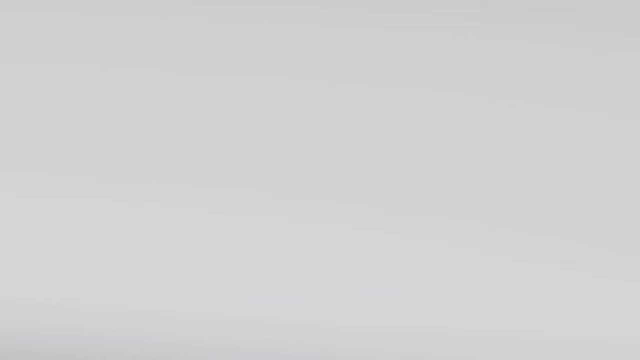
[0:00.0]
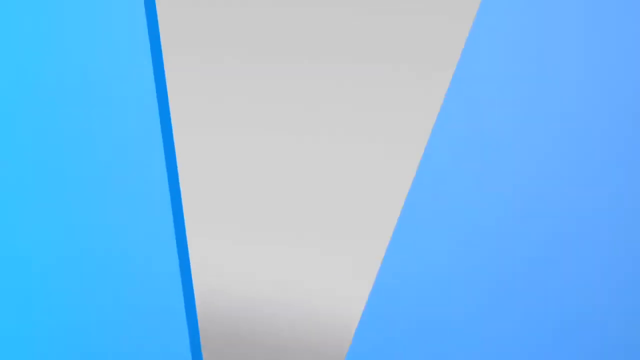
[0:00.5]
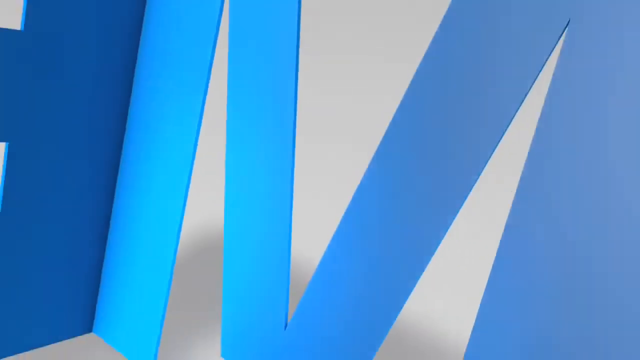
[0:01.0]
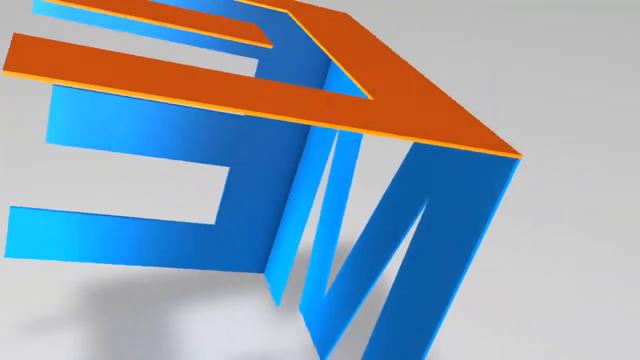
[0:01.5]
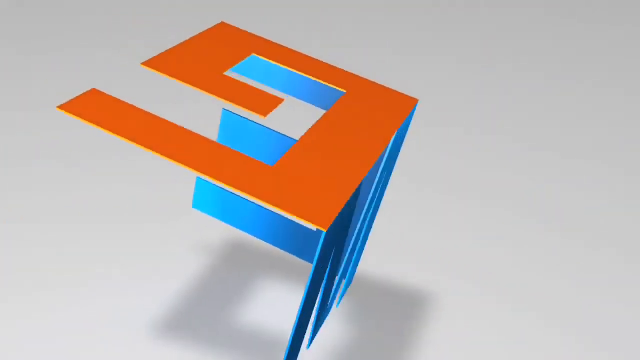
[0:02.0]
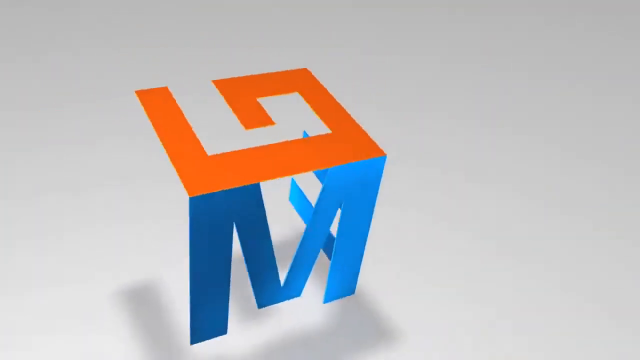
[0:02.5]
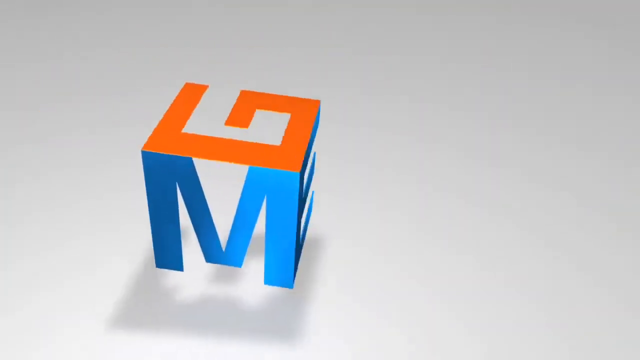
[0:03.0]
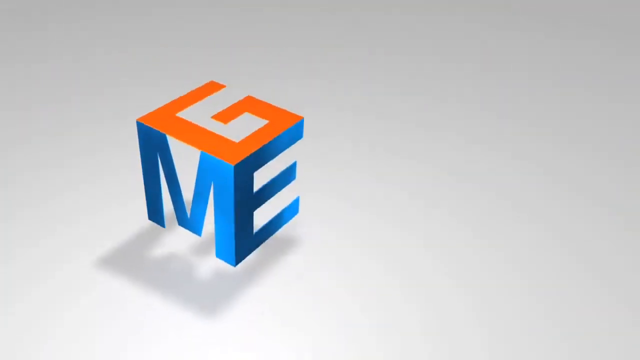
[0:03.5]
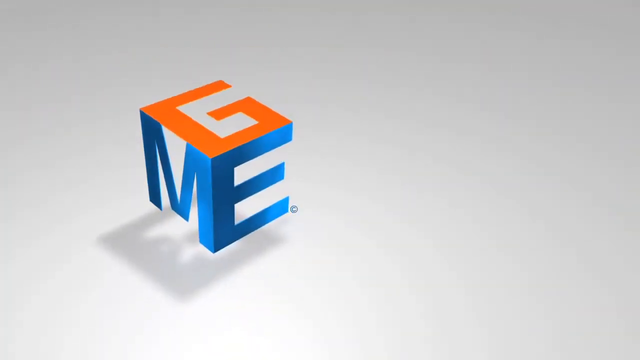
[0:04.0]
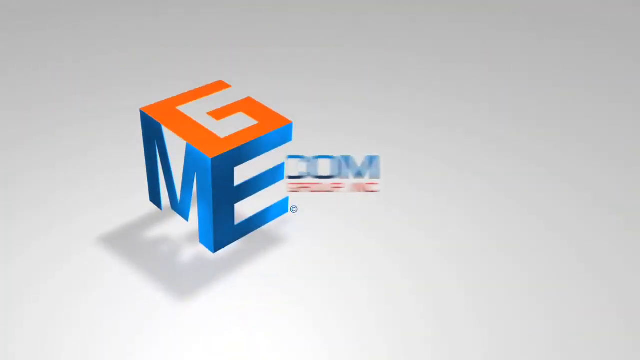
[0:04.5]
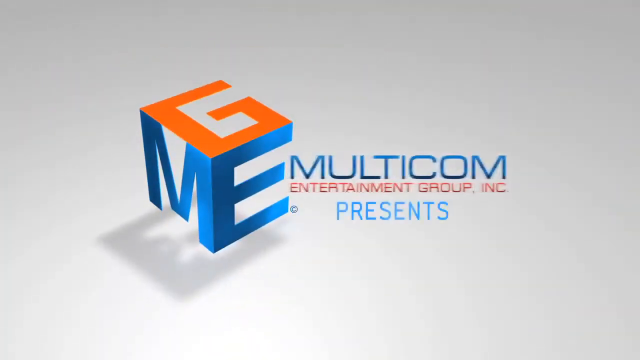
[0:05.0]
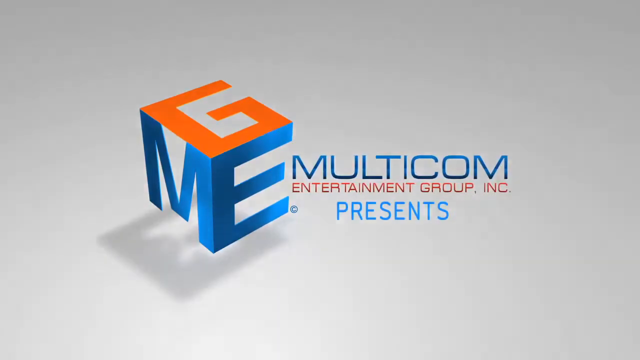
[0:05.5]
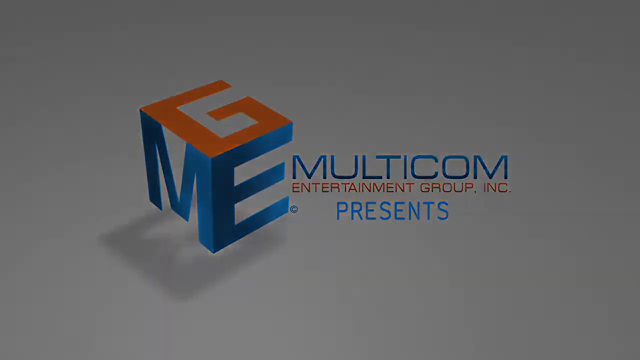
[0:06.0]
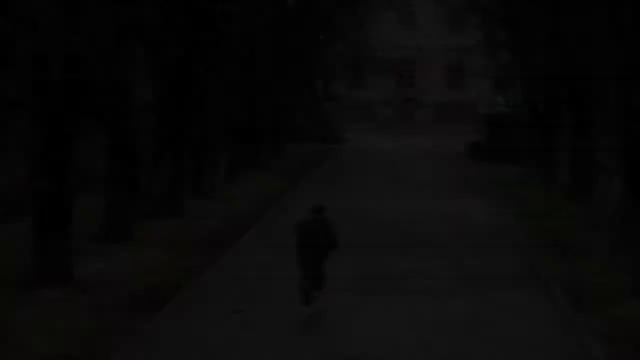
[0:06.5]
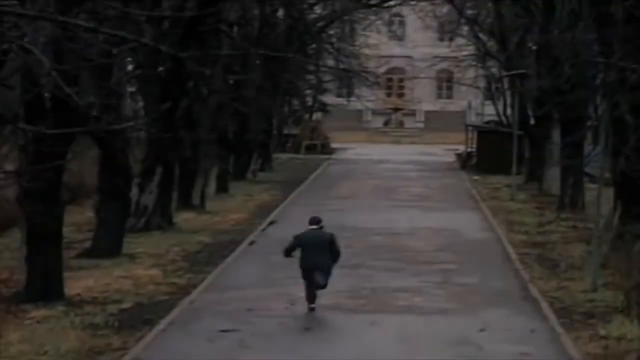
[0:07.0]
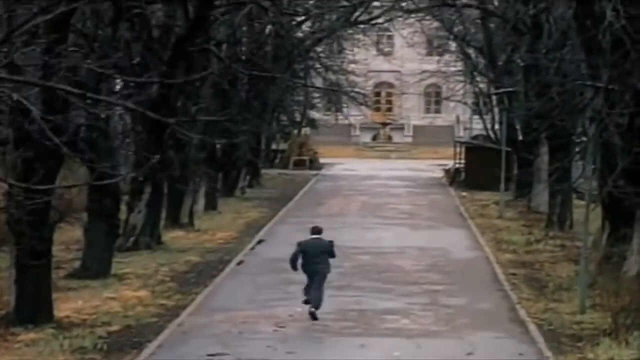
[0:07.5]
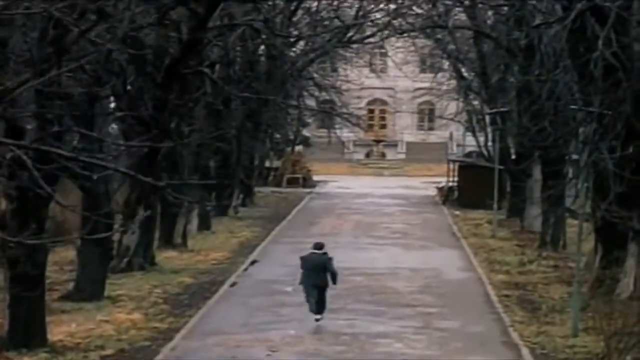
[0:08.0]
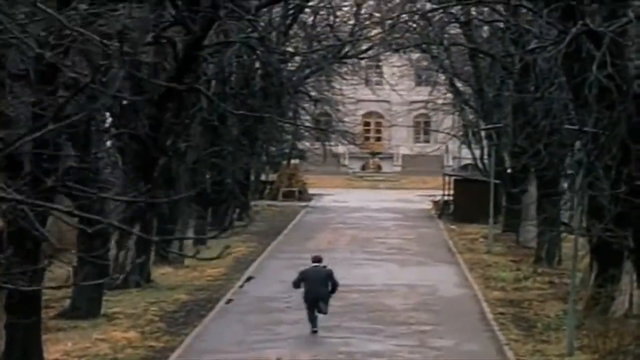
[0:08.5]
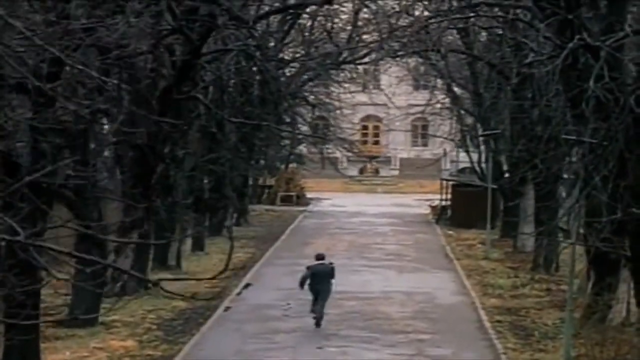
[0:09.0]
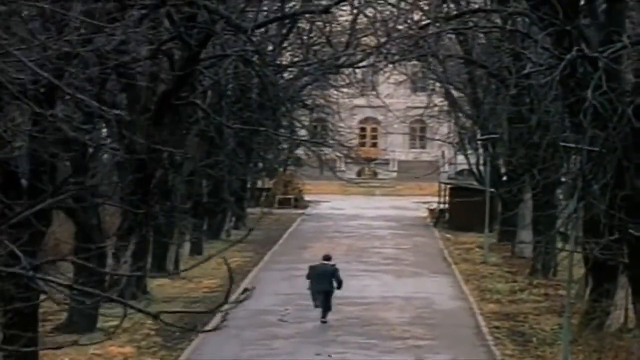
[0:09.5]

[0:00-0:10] A man in a gray or black suit, probably middle-aged at around 35 to 45 years old, with dark hair, runs down a wide path or driveway. He is the only person in the video. He runs along a huge tree-lined drive, with lots of trees on both sides, toward a great big mansion. The trees have no leaves, and no sunshine is visible, so it may be fall.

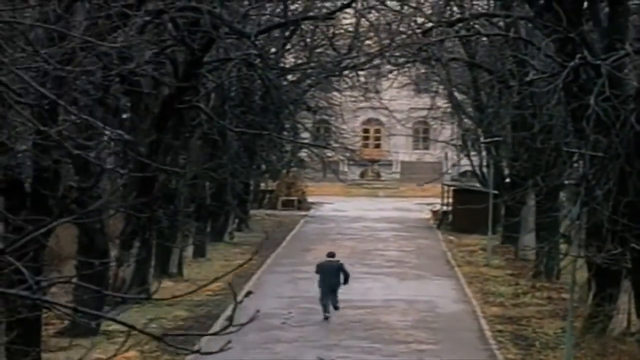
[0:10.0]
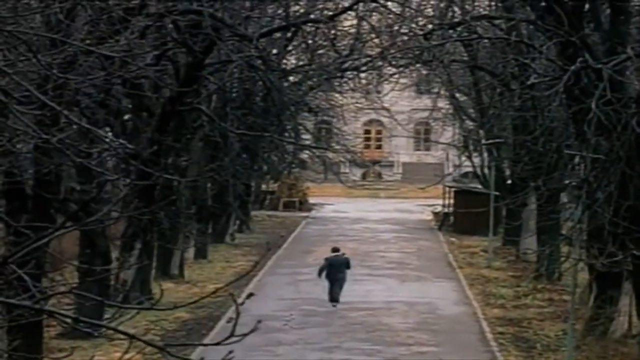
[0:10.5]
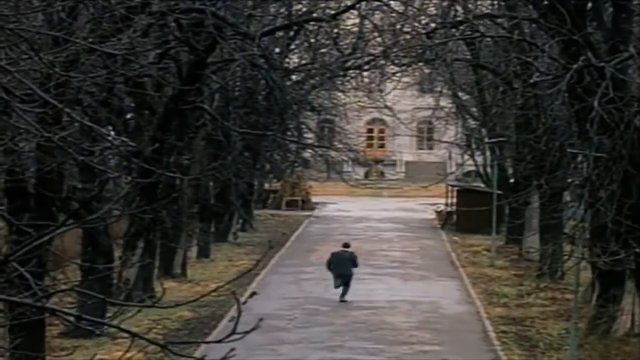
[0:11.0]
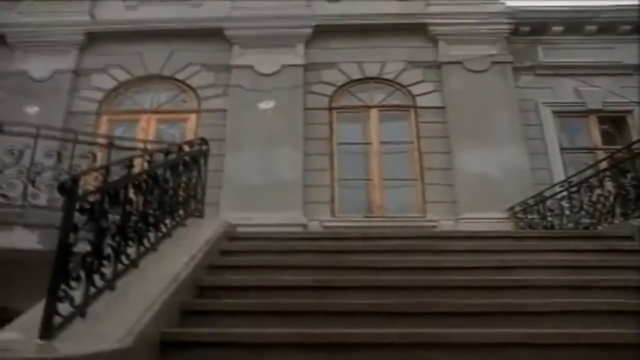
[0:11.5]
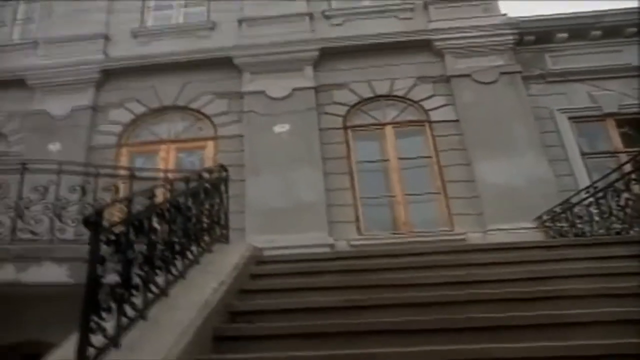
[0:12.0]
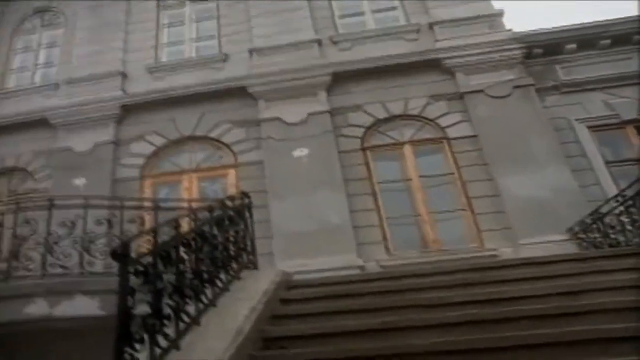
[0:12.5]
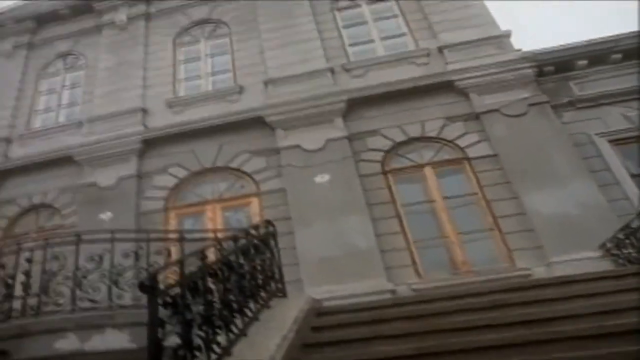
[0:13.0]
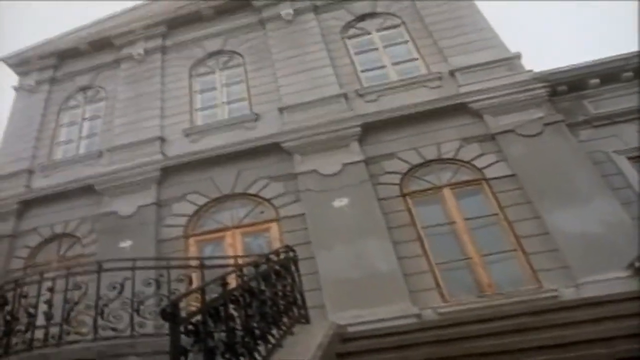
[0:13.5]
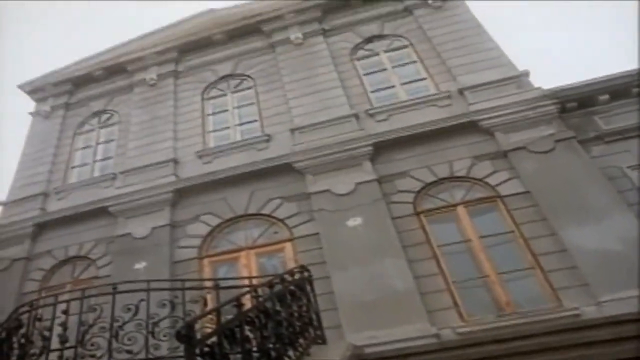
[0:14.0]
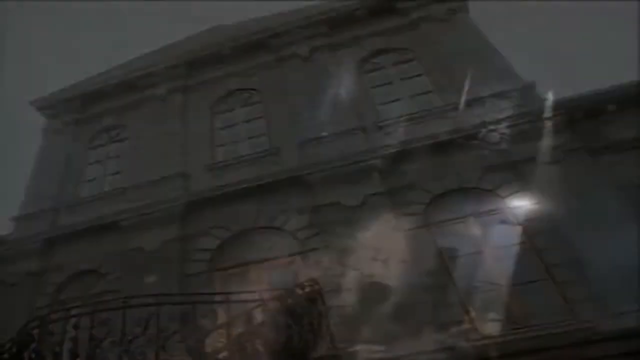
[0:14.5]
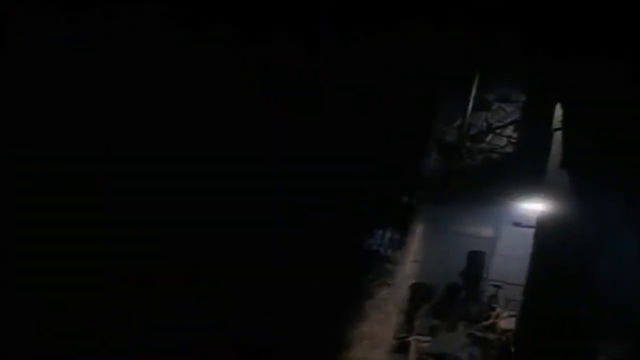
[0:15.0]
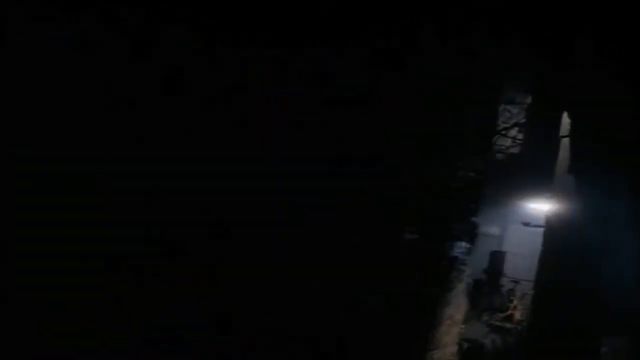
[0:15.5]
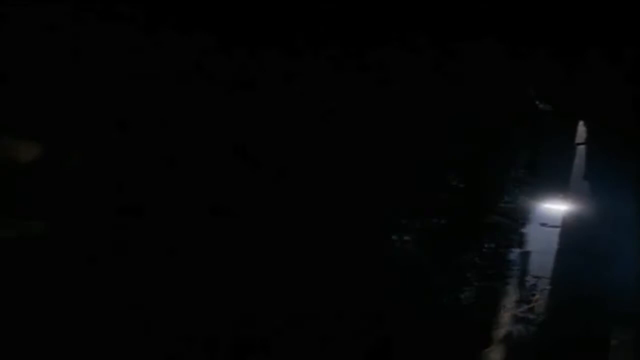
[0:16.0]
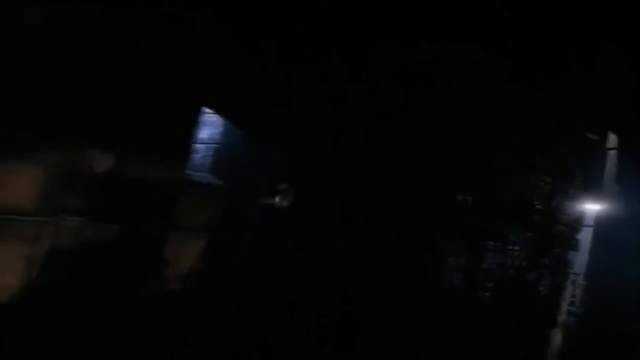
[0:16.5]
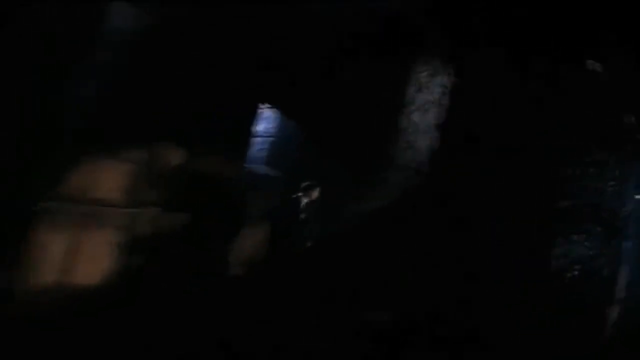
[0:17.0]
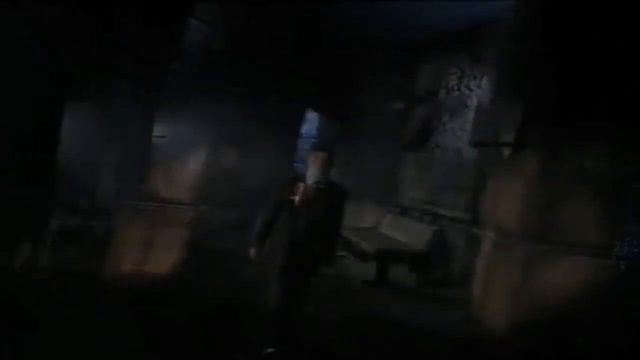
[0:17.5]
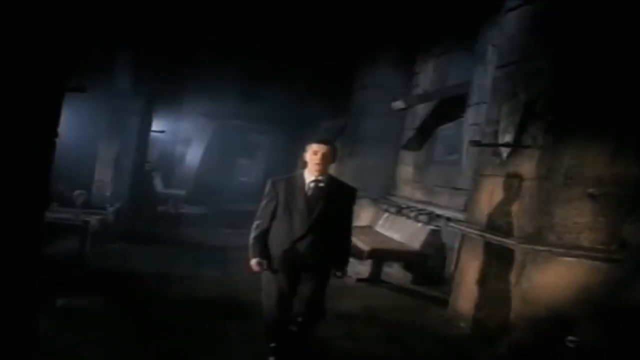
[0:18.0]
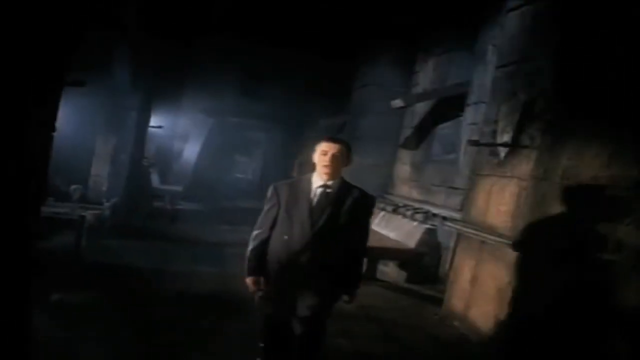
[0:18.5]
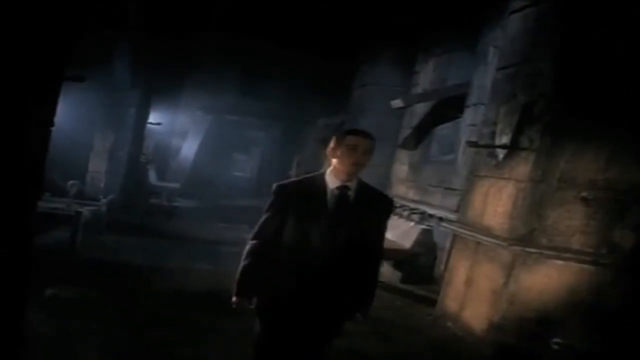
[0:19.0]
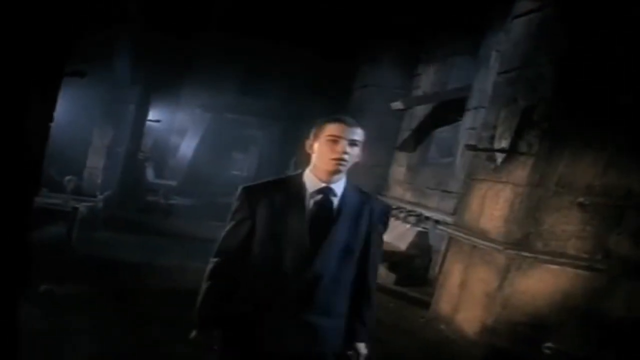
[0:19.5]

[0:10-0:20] The man still seems to be running up the path, and as he quickly nears the mansion, more of it is shown: ornate iron scroll stair rails and huge white stones on a grand mansion. The scene then moves inside, where the mansion looks like it may need repairs and has not been cared for much; there are no paintings on the wall, and the wall looks a little like it is falling apart. A separate, younger man appears, apparently in his early 20s or so, wearing a gray suit and a wide tie, possibly suggesting the 80s or 90s.